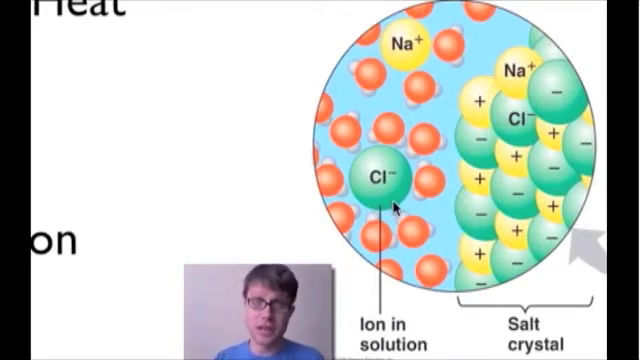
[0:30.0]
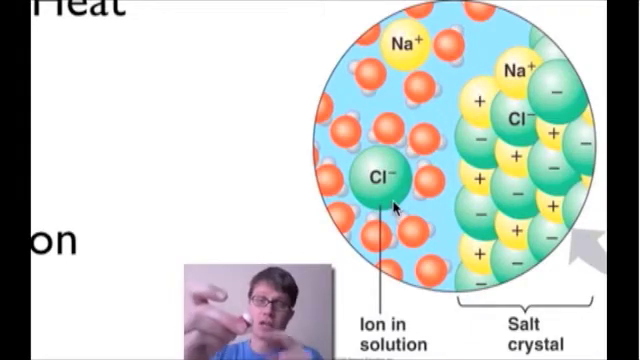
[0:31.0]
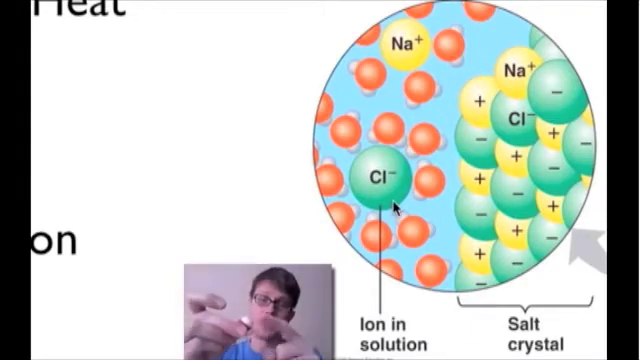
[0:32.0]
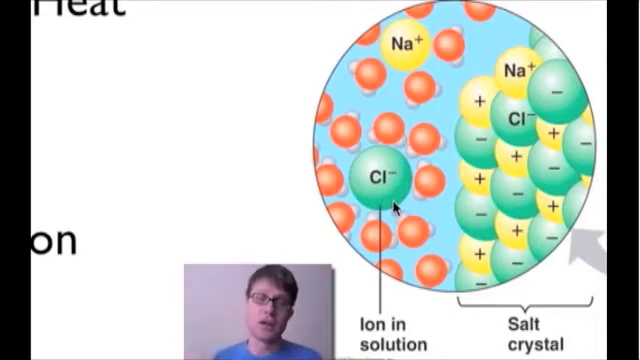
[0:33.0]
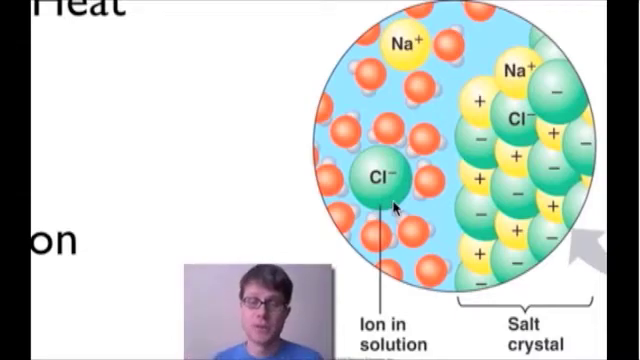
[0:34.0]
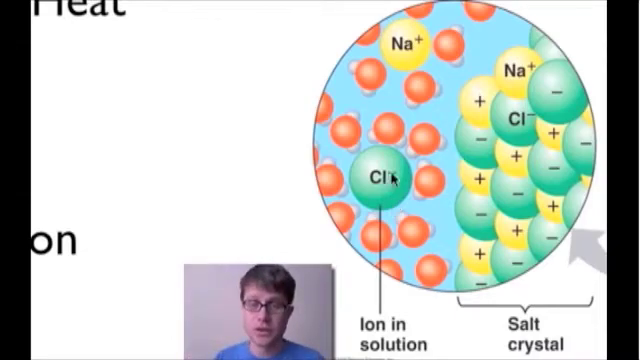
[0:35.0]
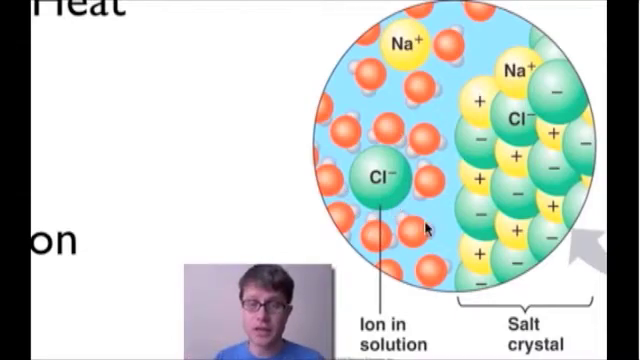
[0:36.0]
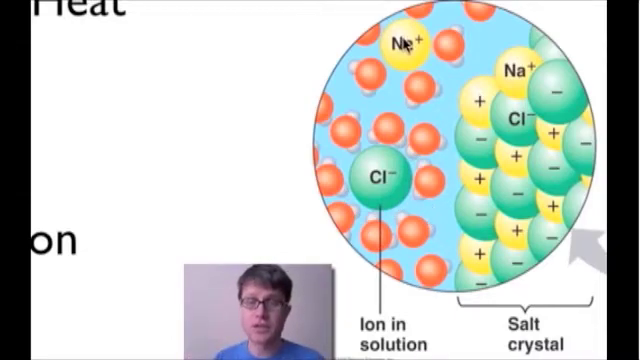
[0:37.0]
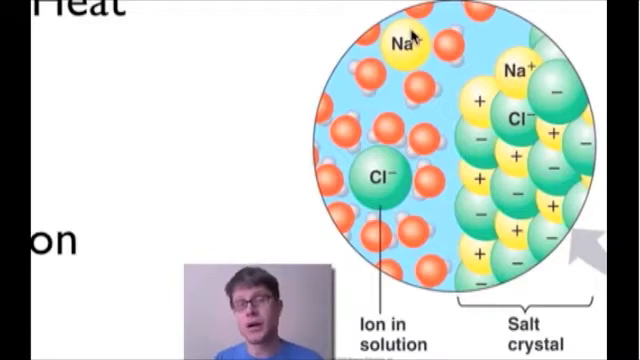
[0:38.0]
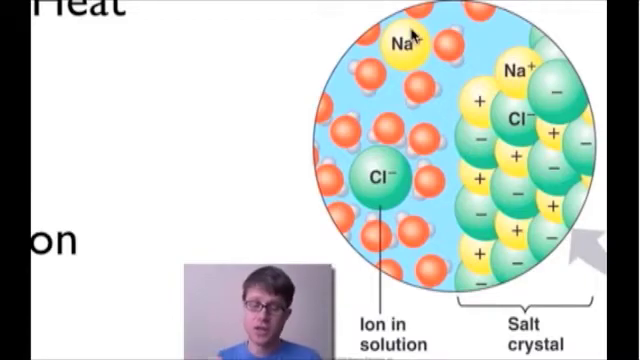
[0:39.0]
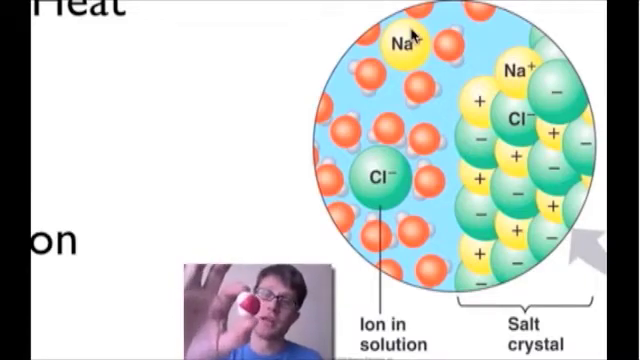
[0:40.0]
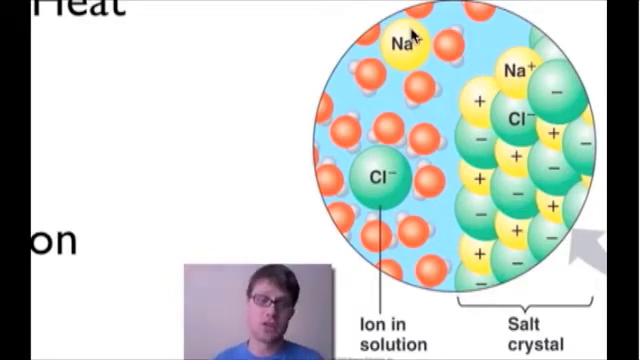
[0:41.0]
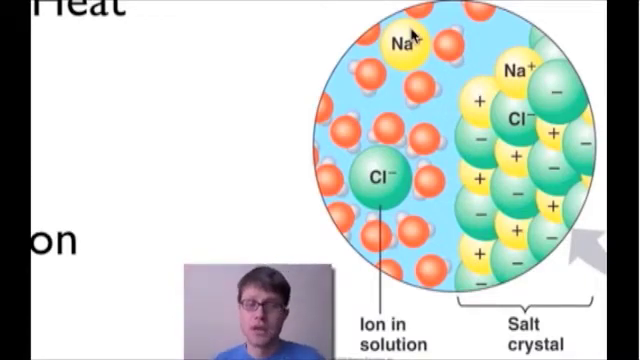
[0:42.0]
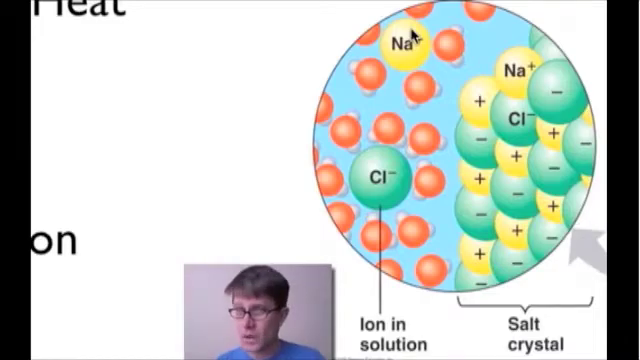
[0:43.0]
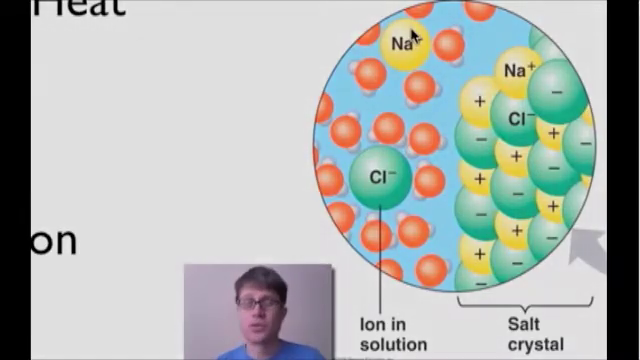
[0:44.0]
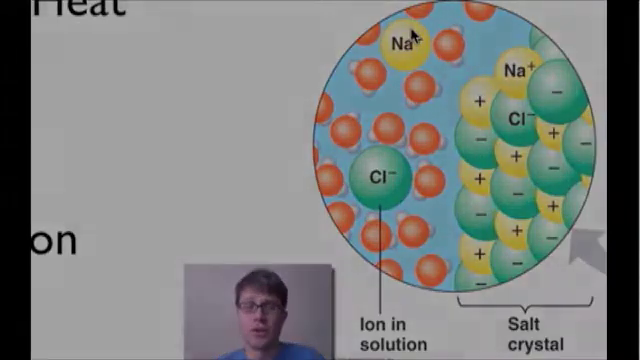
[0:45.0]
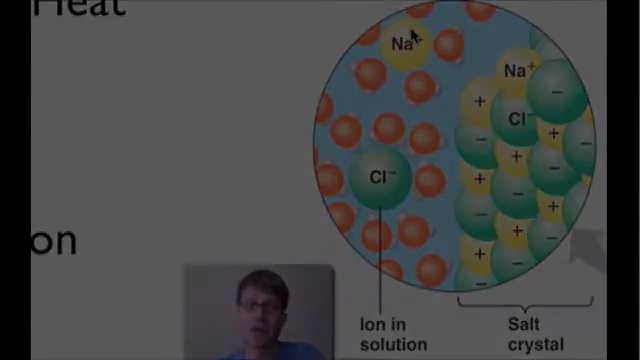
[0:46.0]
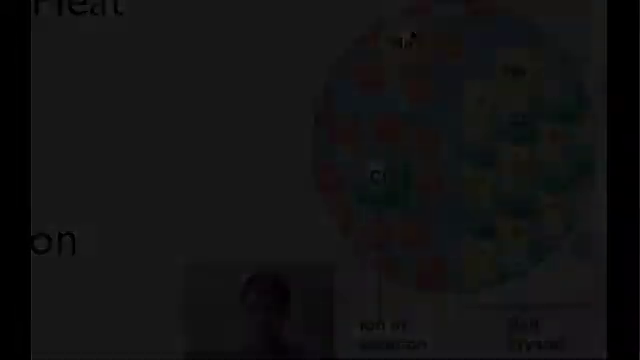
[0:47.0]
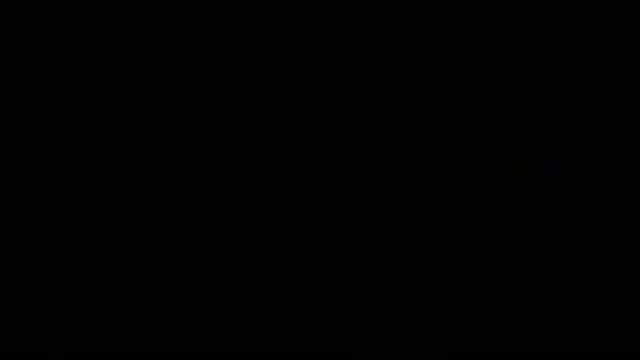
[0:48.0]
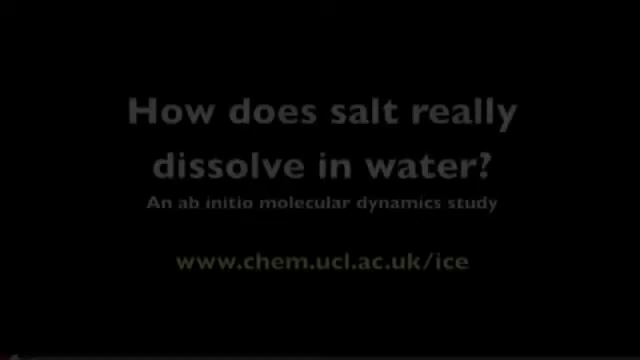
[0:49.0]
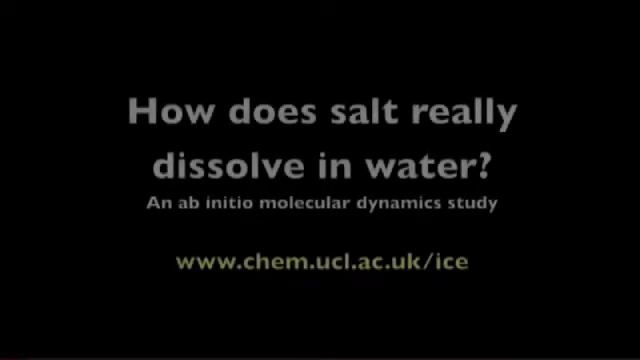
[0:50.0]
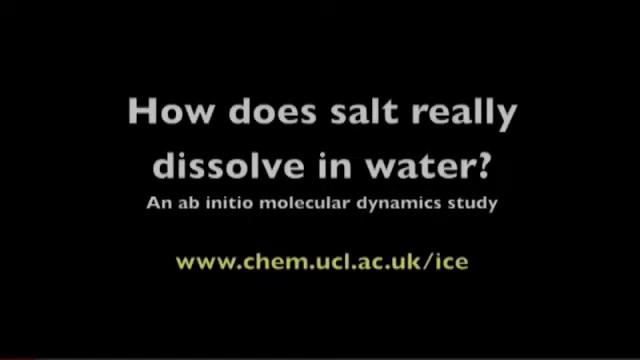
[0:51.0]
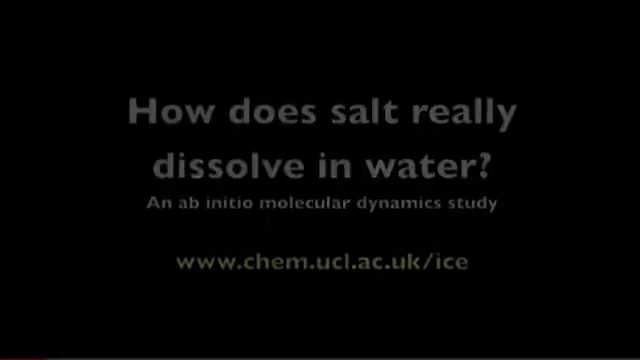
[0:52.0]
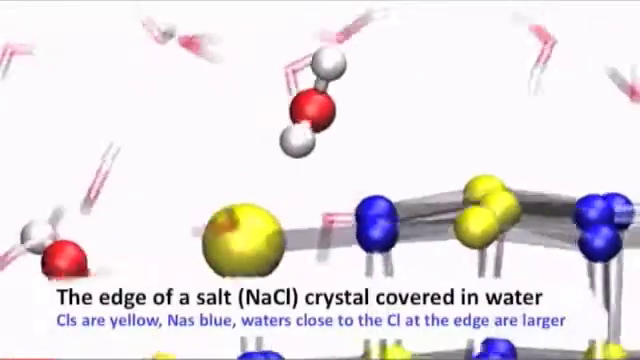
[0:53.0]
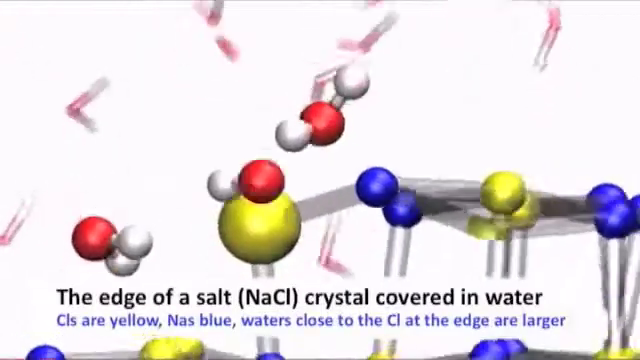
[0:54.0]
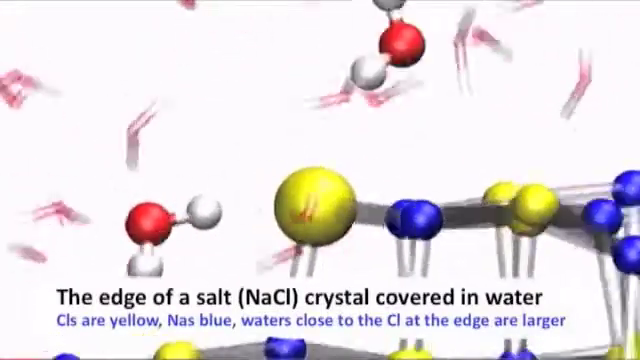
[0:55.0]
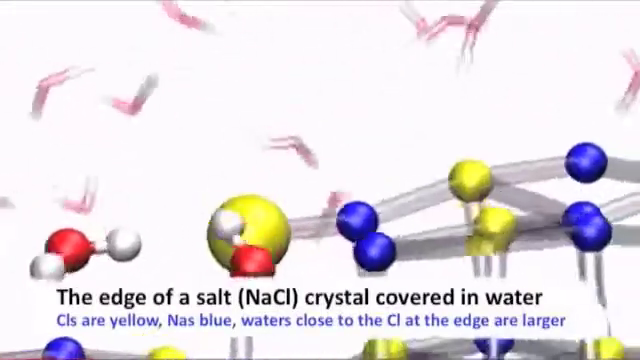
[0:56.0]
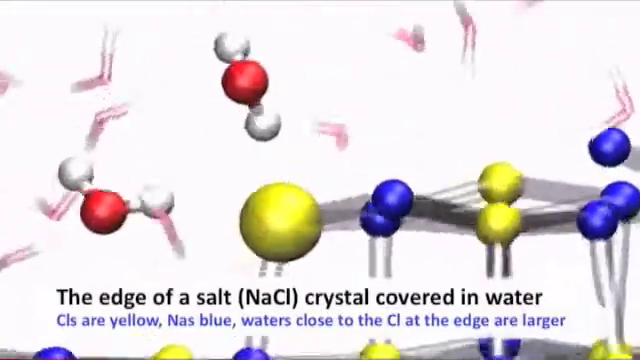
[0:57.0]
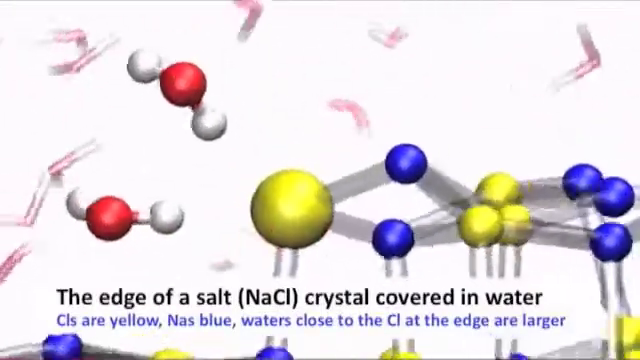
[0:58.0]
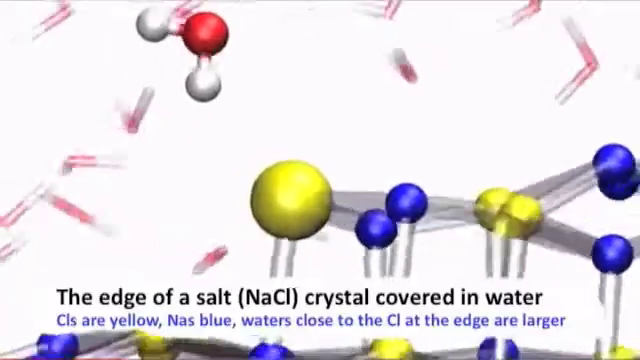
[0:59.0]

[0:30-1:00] A man speaks in a little box at the bottom of the screen. A cursor moves around a cell, and he shows something between his finger and thumb on his right hand. The cursor also moves around a large round object with cells inside. The next screen shows connected red, yellow, and purple cells bouncing around, along with other bouncing cells and V-like formations; they are animated, not real. A very large gray arrow points to a very large blue cell containing large green cells, smaller orange ones, and yellow ones. Text reads "how does salt really dissolve in water? An Ab Inito Molecular Dynamics Study" along with a website for reference.